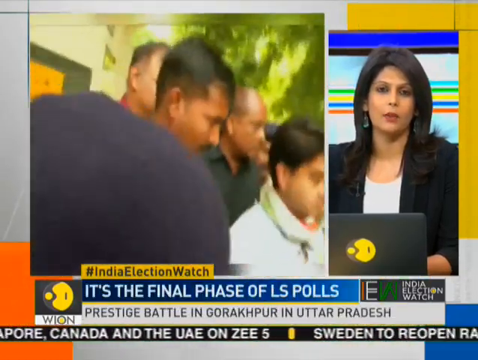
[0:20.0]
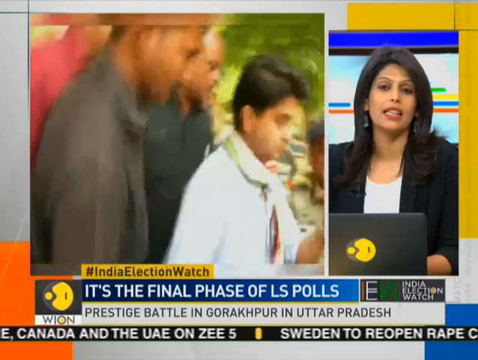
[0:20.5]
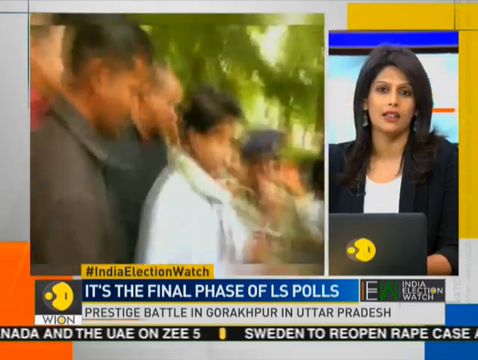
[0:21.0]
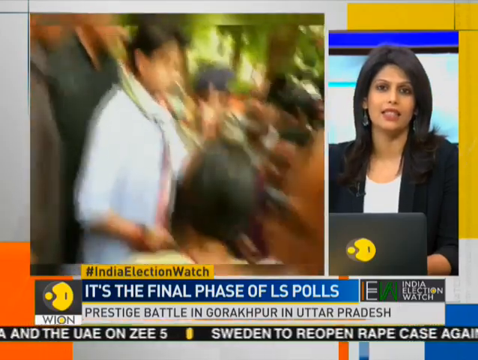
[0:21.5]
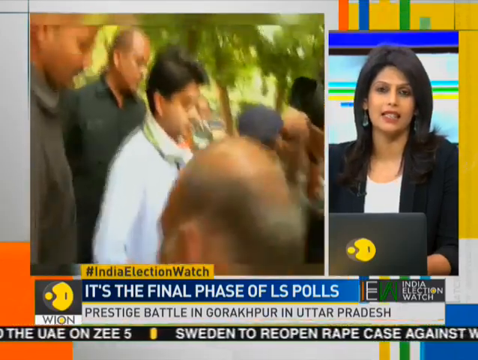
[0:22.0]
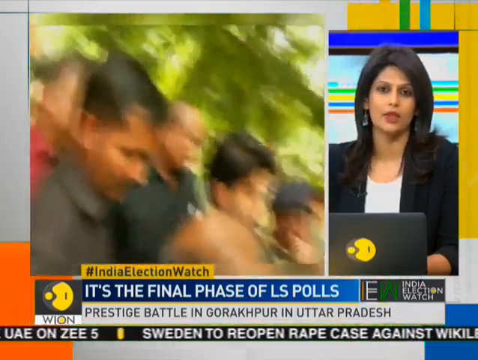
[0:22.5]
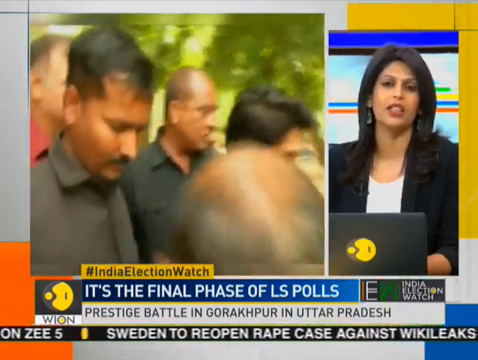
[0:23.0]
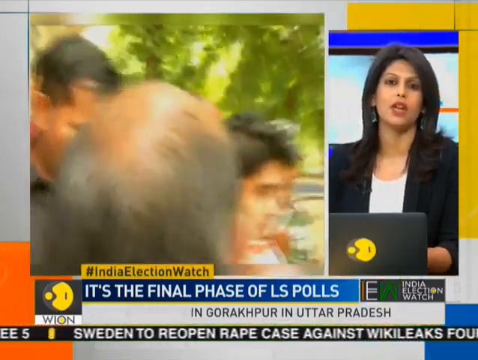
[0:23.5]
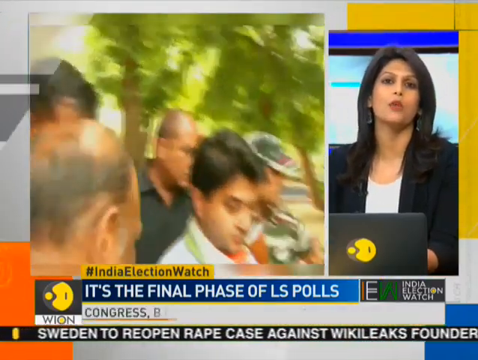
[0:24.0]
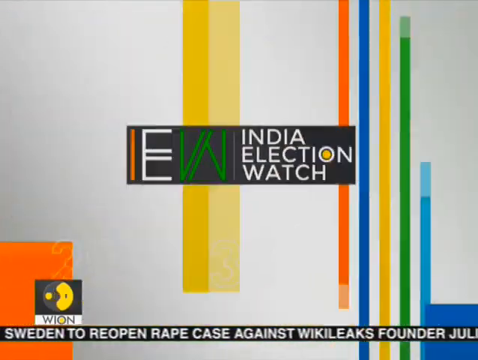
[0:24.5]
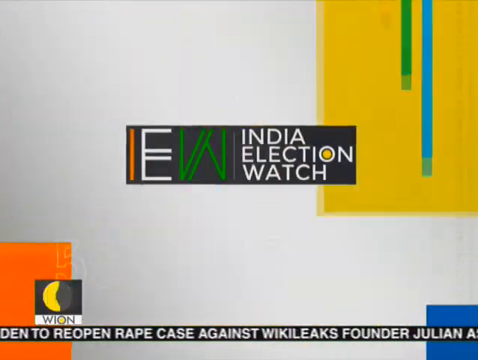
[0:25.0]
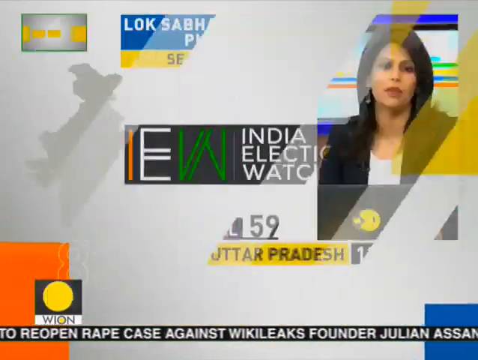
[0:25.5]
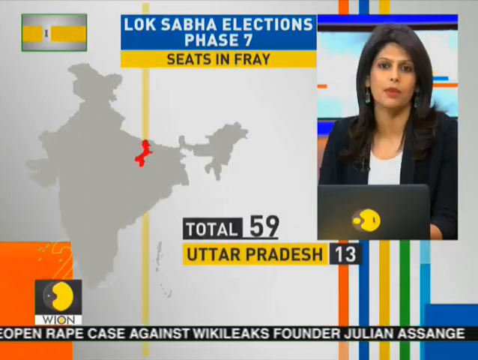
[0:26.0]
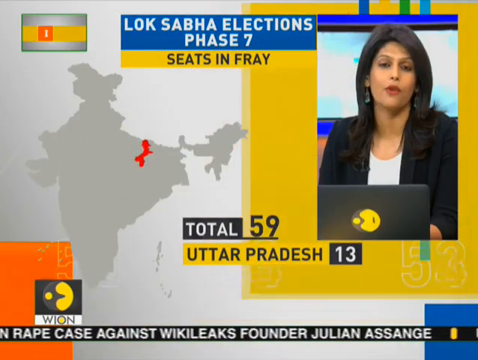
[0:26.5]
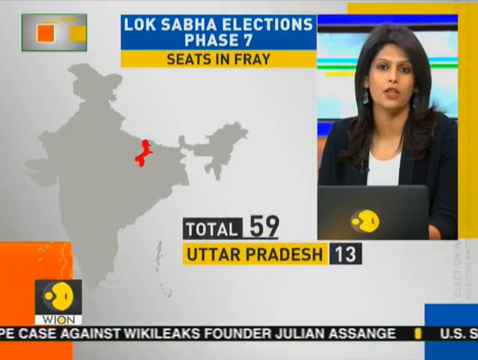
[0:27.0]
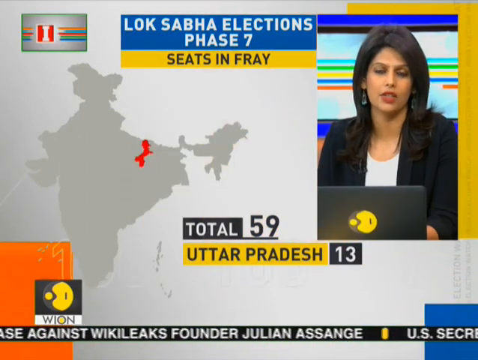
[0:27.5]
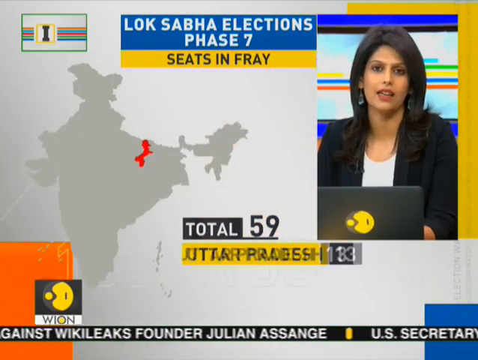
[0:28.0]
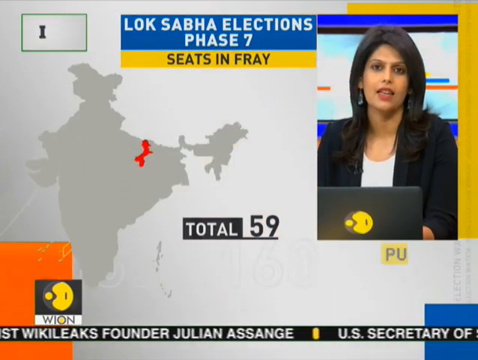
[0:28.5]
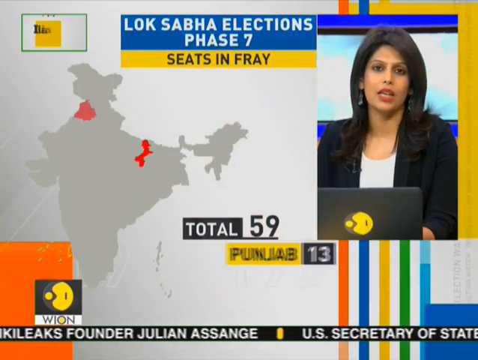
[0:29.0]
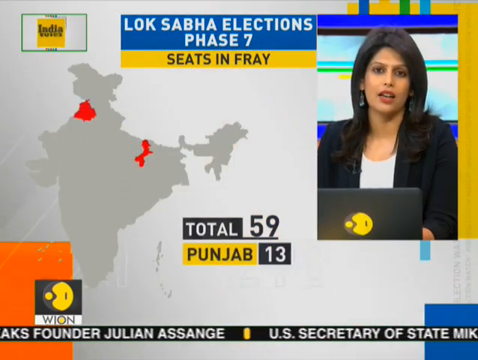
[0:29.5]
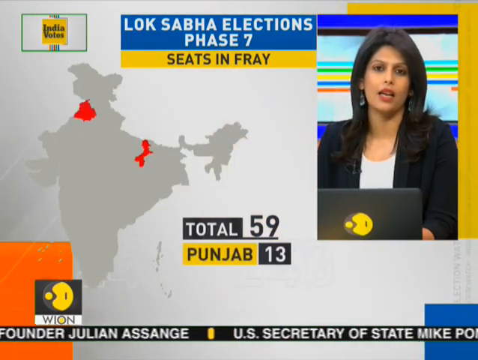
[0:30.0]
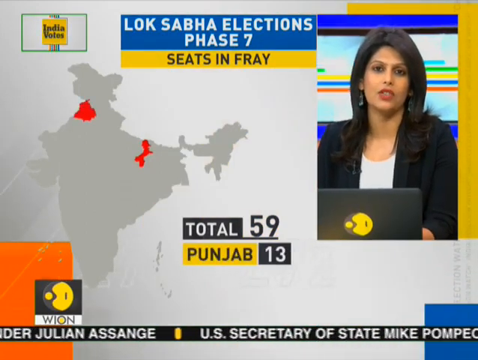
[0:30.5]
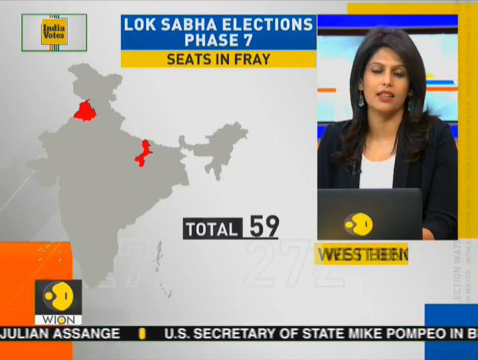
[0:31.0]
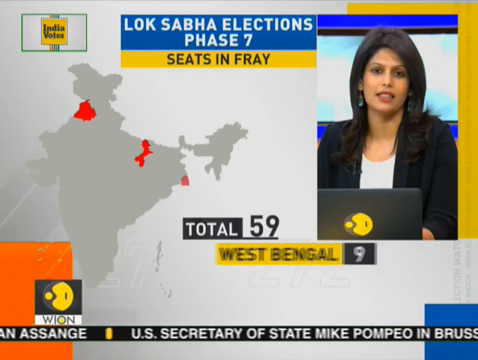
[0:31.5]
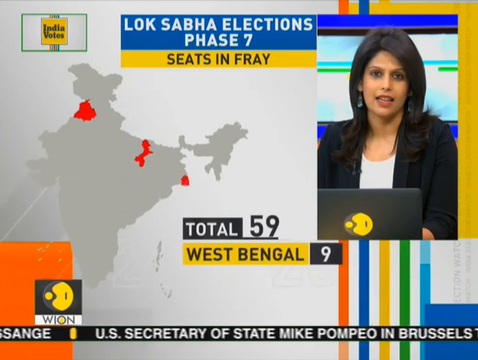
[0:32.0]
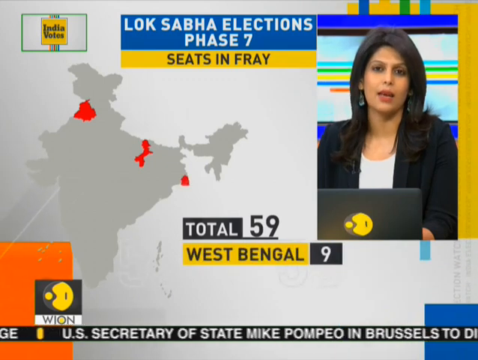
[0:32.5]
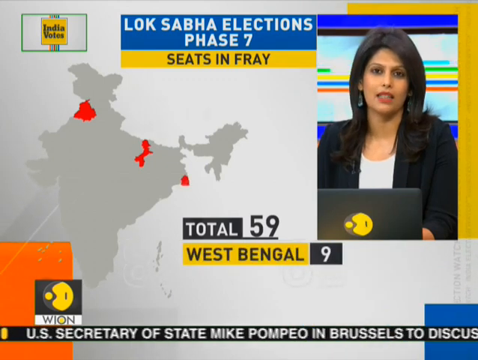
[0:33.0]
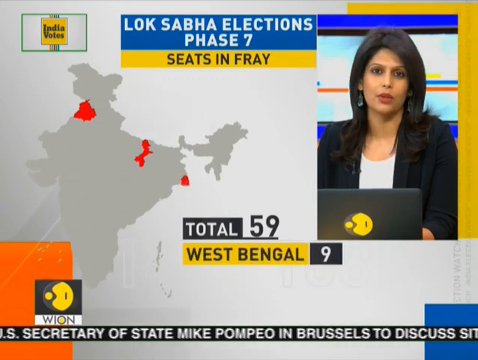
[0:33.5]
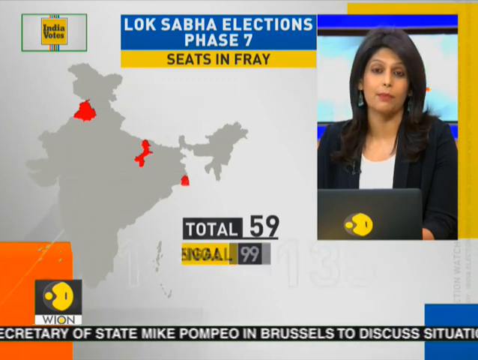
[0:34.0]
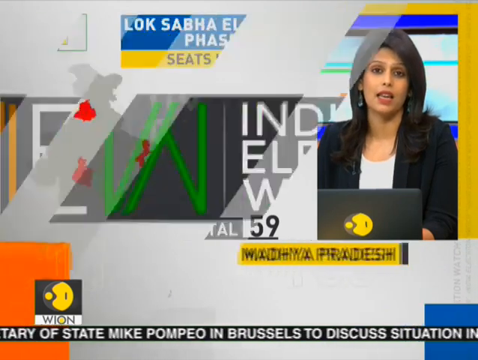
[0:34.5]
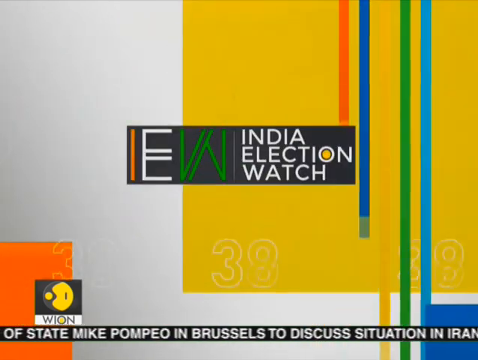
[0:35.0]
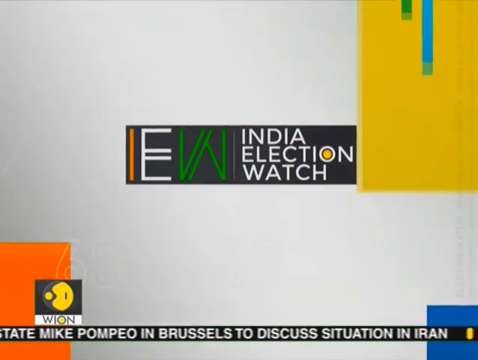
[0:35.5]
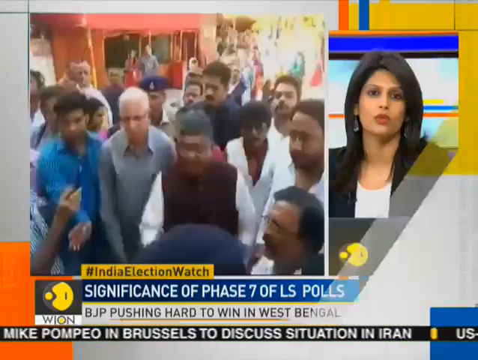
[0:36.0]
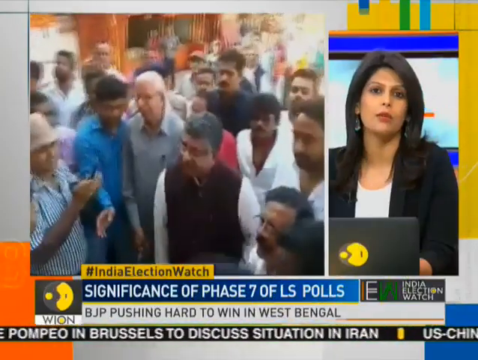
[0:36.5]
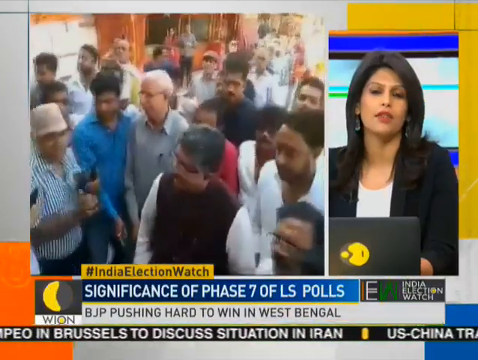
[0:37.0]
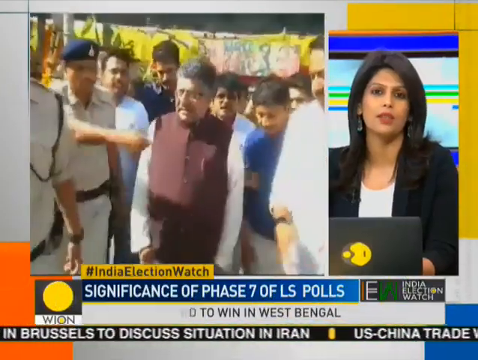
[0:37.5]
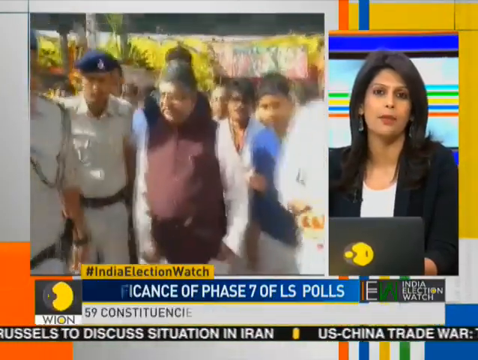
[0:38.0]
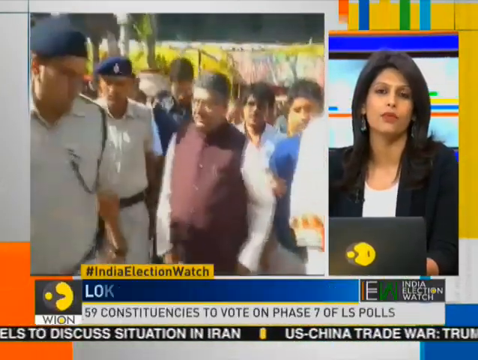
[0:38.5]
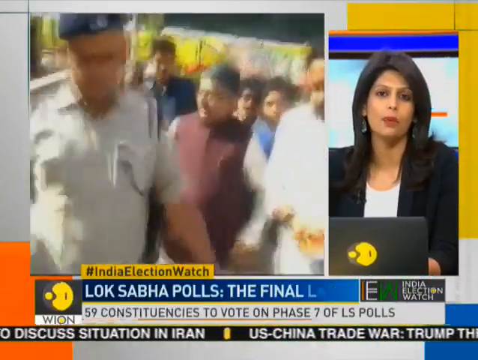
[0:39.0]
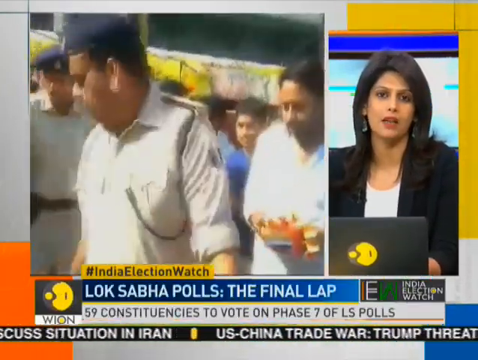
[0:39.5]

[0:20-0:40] On the right side of the frame, the anchor is still in the newsroom in the black coat and white top, operating a laptop. On the left is a video of what appears to be a leader, with bodyguards at the back, a policeman with a gun, people taking pictures and others asking questions. The highlights read "Indian election watch" and "it is the final phase of LS polls, prestige battle in Gorakhpur in Uttar Pradesh." An Indian man wearing white talks to the camera, followed by the Indian election watch logo. The broadcast returns to the studio: the anchor is in a frame in the upper right, still in the newsroom, with the laptop and the logo at the back. On the right side is a map of India with Lok Sabha elections information showing 57 seats and a total of 59, and Uttar Pradesh, with a red highlighted area on the map; Punjab is shown with 13 and West Bengal with 9. Another split view follows, with the anchor in the newsroom on the right and, on the left, a video of a person being asked questions, apparently also a leader, while a policeman directs him and shows him where to go.